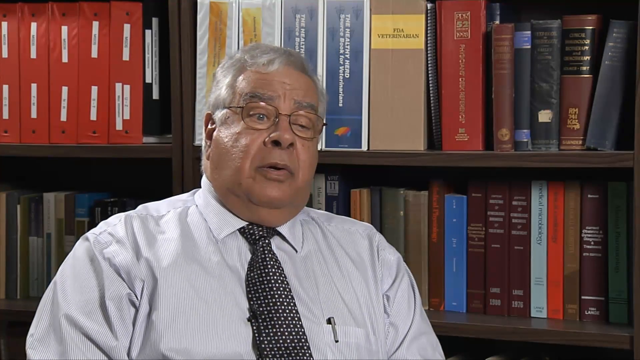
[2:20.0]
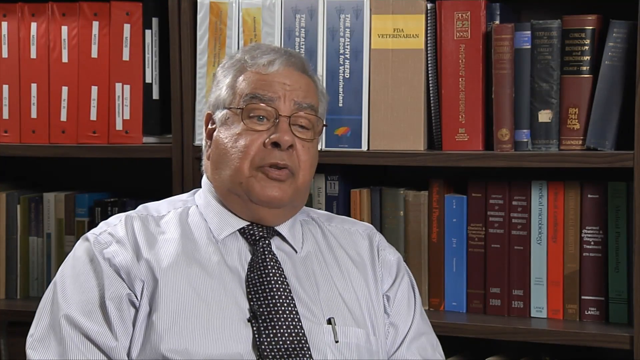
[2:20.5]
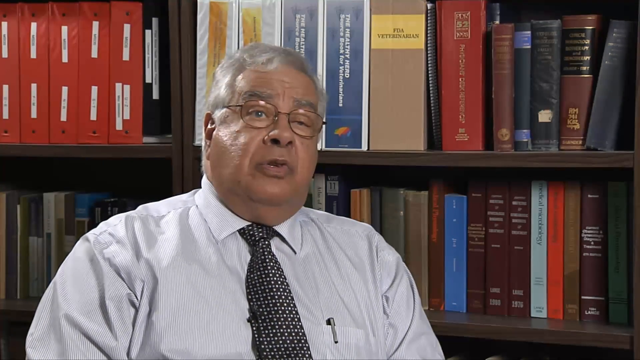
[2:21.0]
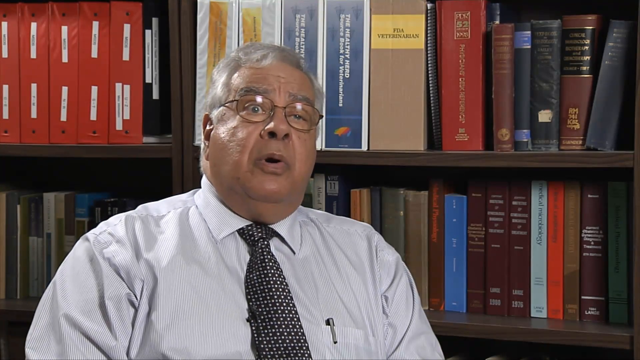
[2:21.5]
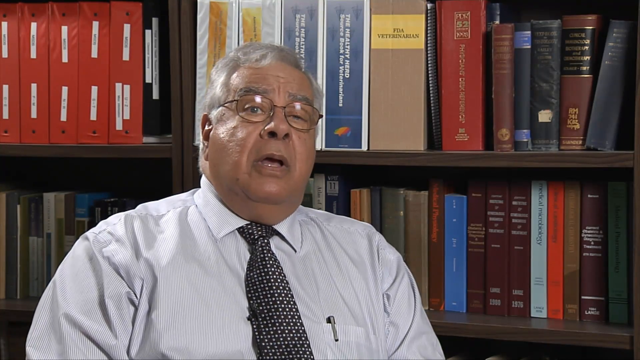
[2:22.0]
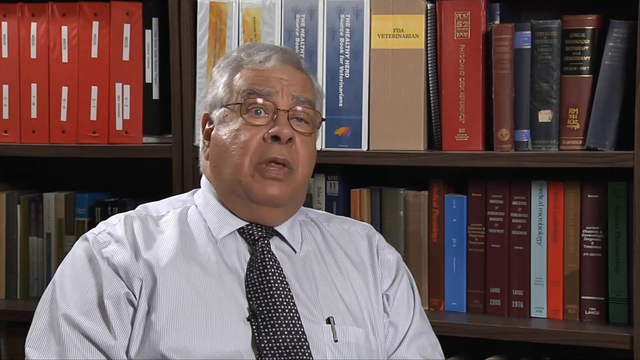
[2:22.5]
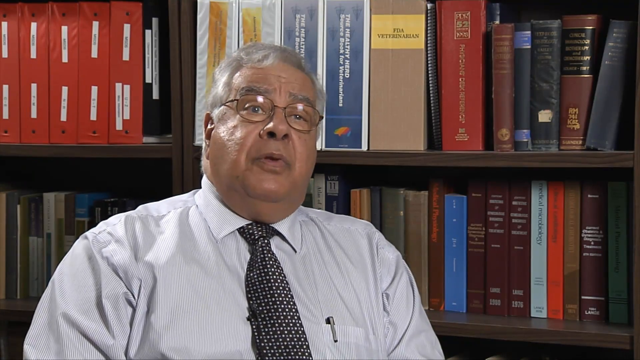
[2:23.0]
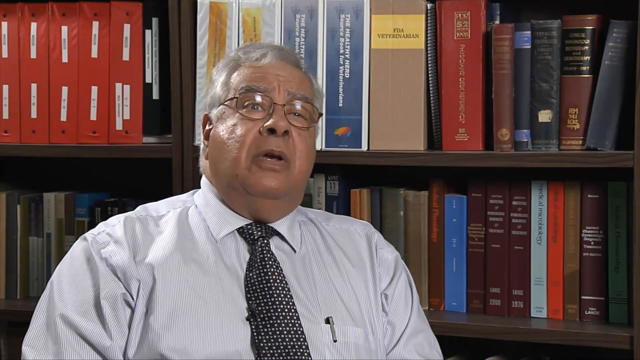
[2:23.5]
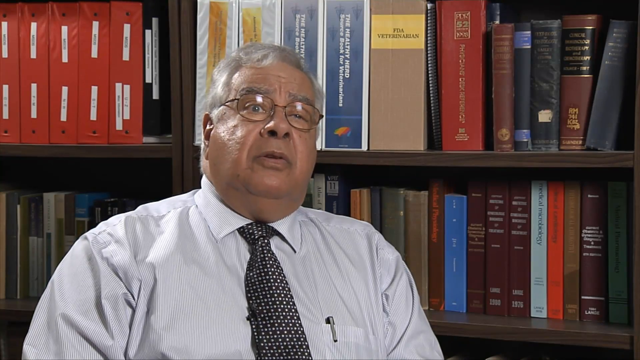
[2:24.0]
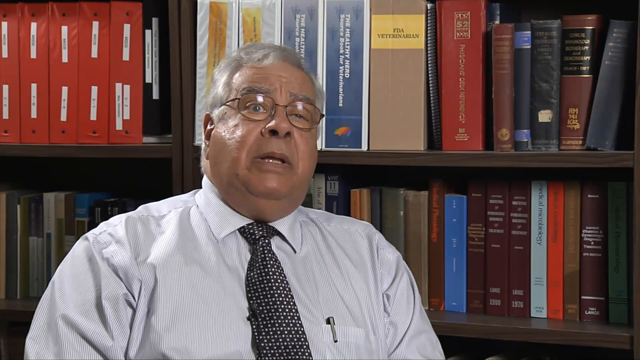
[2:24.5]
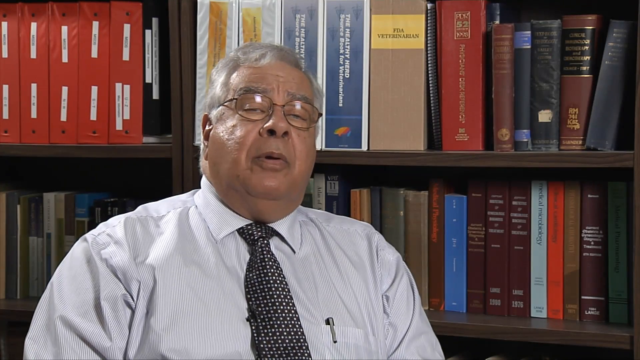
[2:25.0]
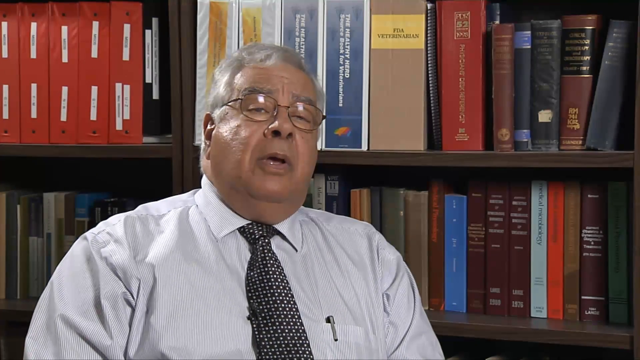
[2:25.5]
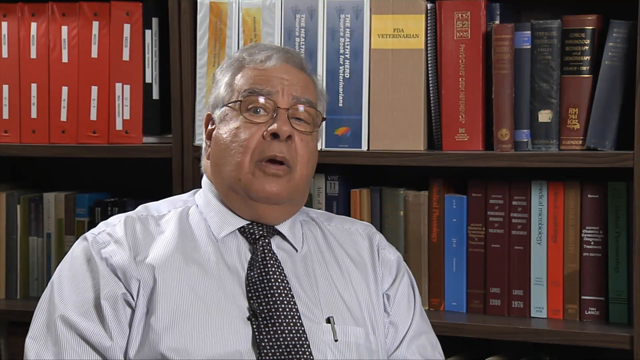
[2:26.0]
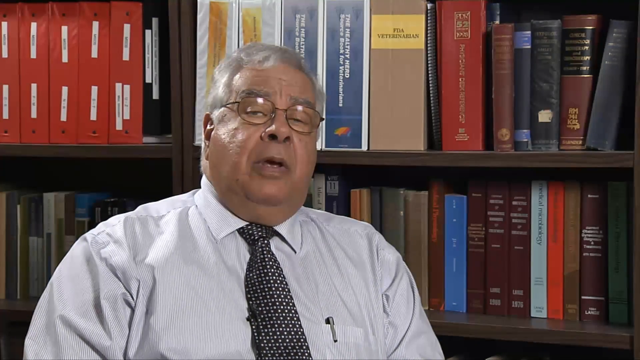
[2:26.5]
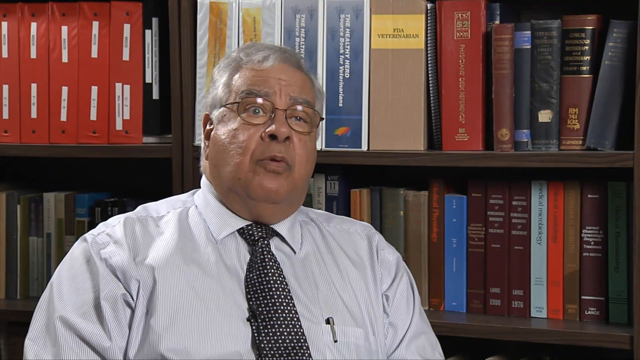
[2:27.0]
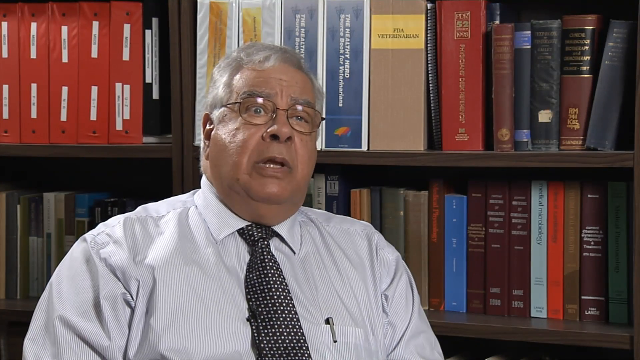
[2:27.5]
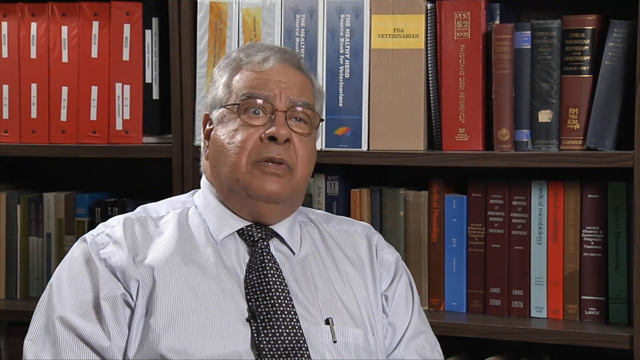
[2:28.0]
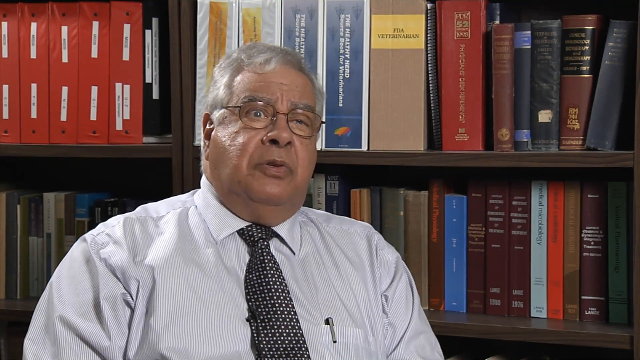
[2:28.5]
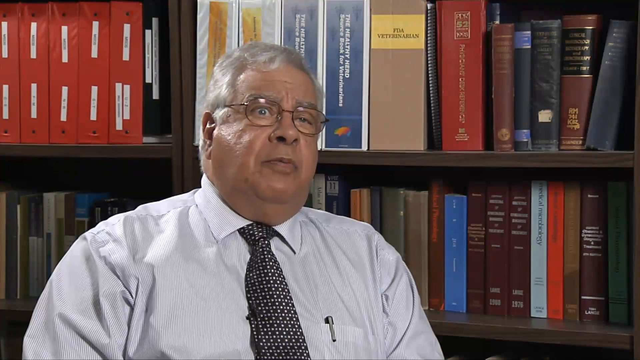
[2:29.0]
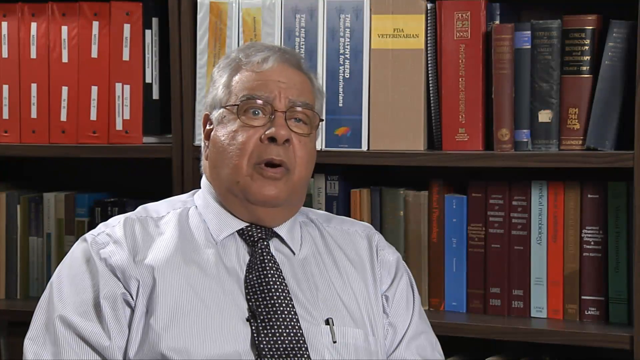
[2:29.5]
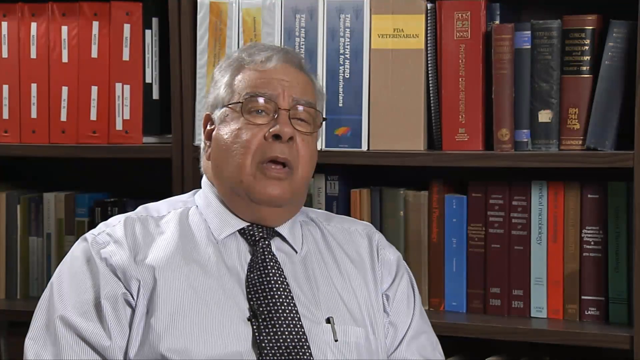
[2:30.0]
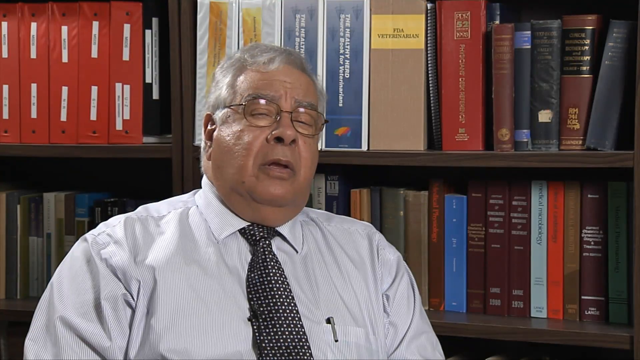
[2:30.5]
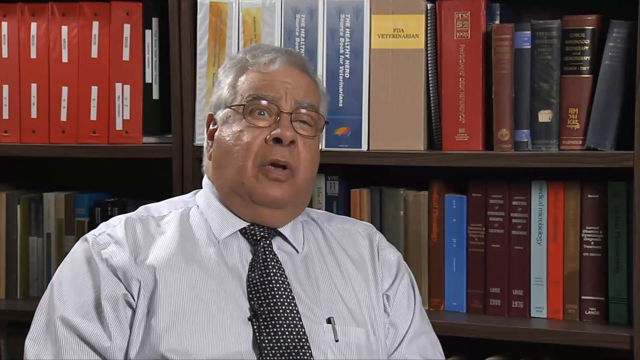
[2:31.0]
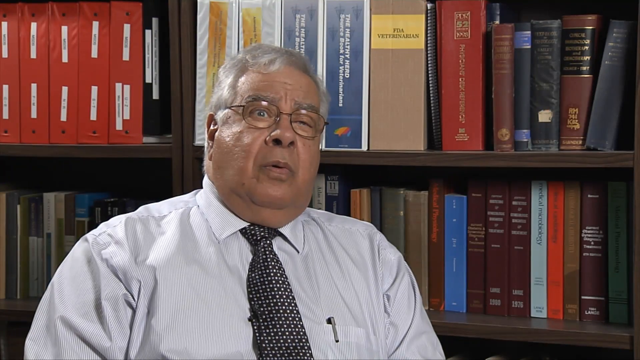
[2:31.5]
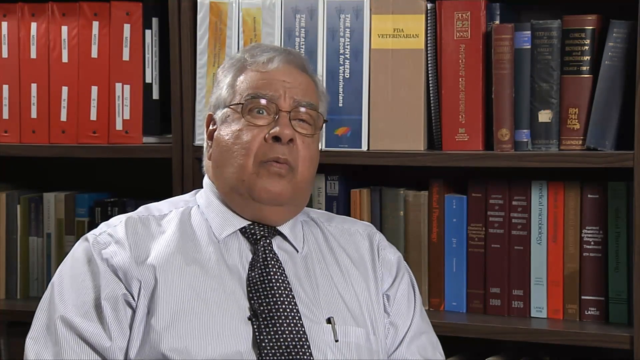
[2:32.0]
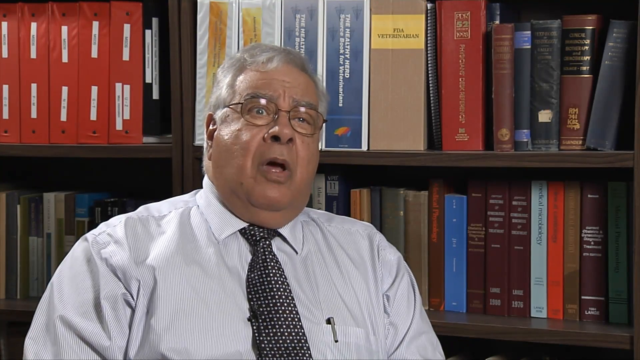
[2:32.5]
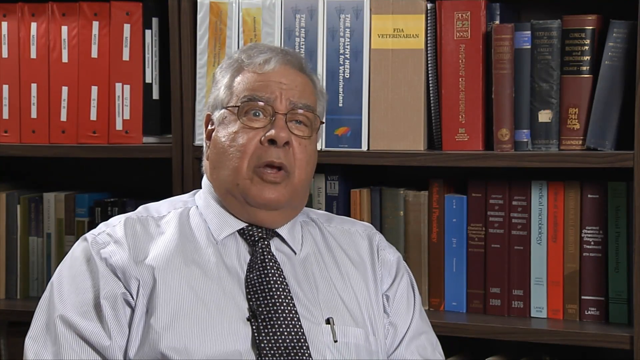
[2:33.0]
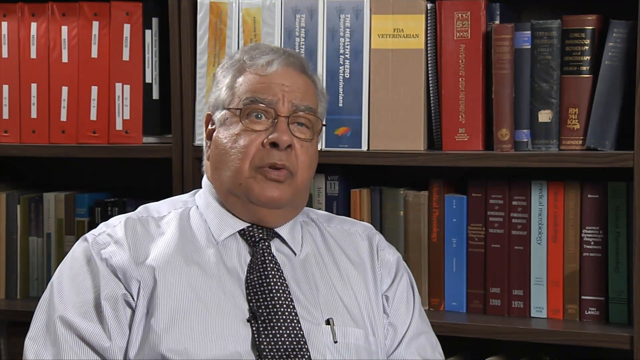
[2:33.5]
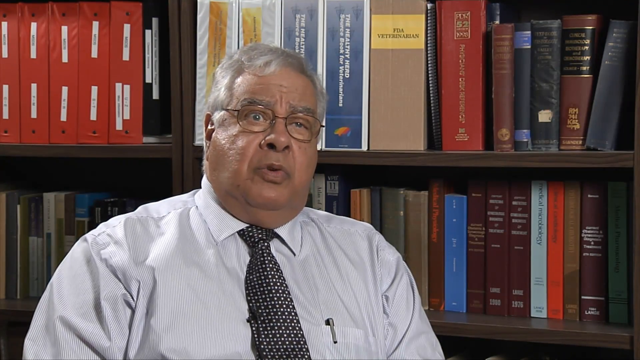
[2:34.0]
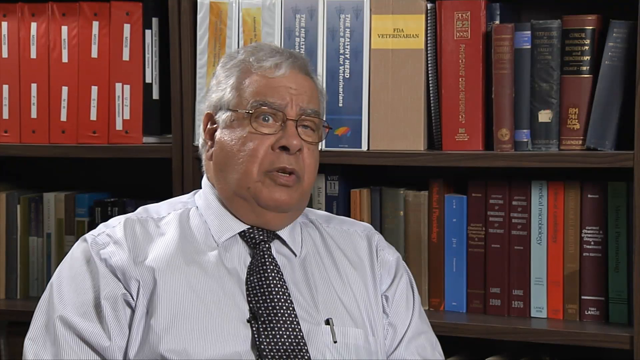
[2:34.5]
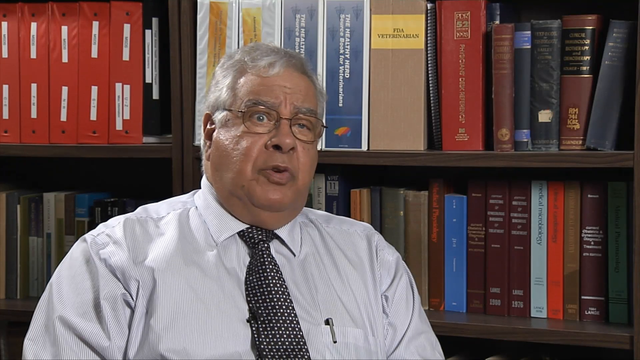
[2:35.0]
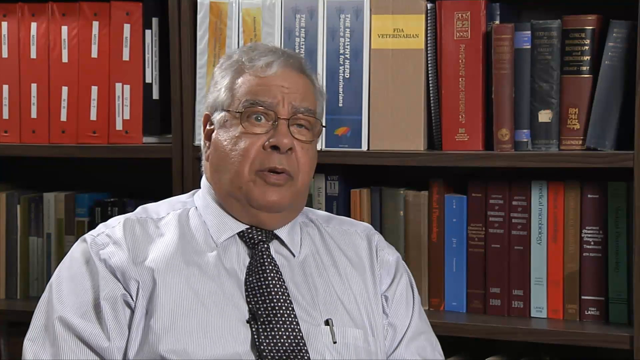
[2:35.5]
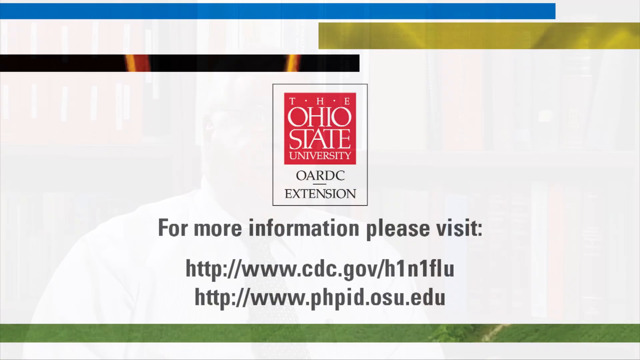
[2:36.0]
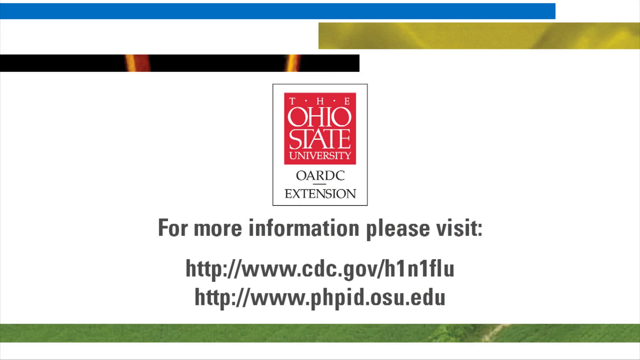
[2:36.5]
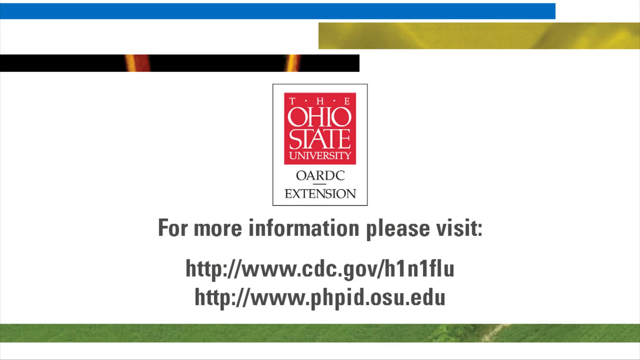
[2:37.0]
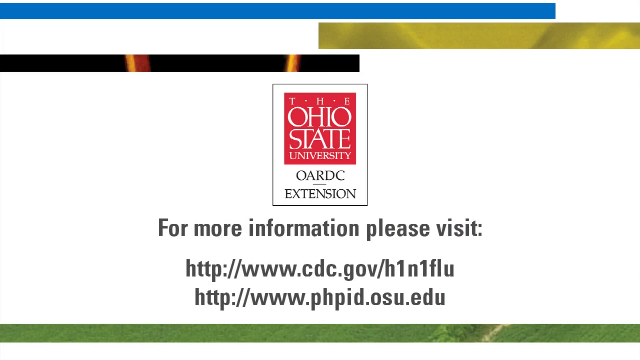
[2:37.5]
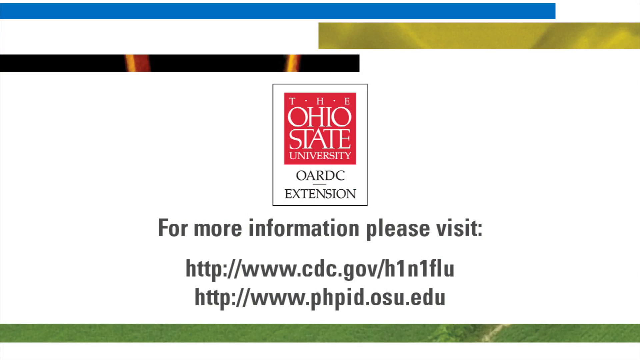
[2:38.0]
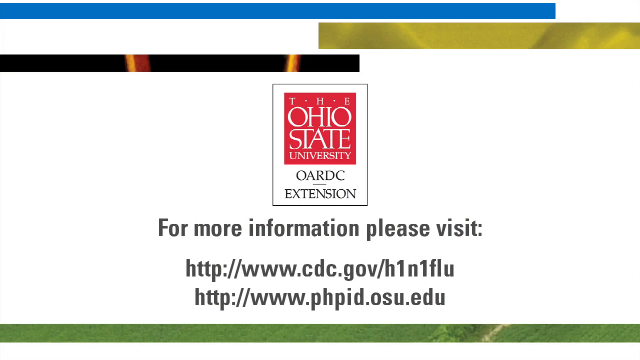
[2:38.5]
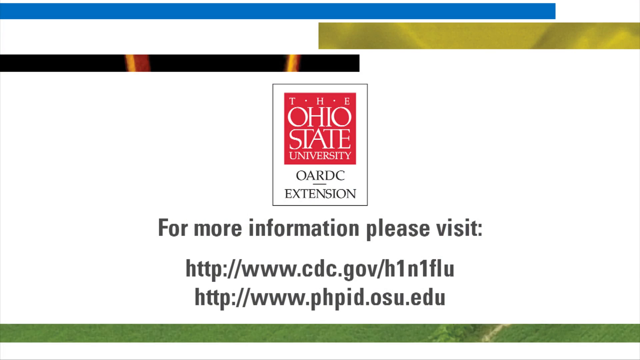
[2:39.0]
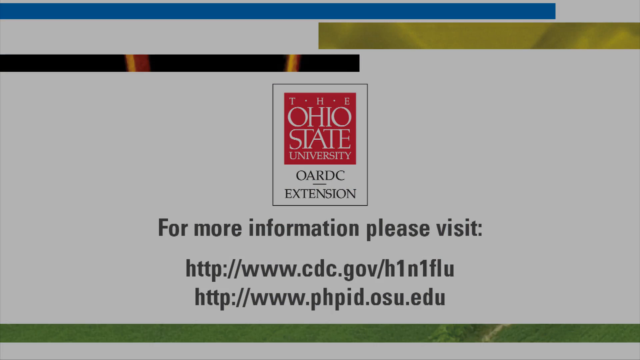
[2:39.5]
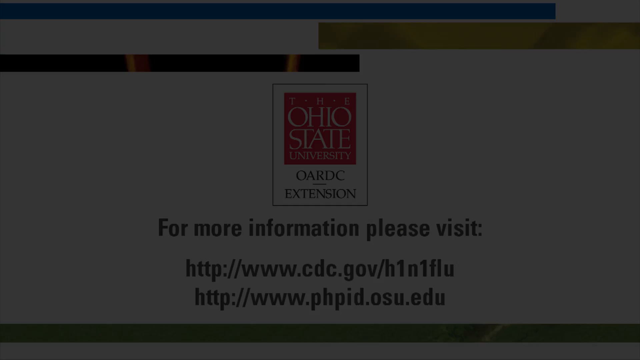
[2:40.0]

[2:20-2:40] The man is sitting at the desk being interviewed, in the same glasses, shirt and tie, in front of the same backdrop, which could be an office or a library. He is still talking. No additional information or illustrations appear.